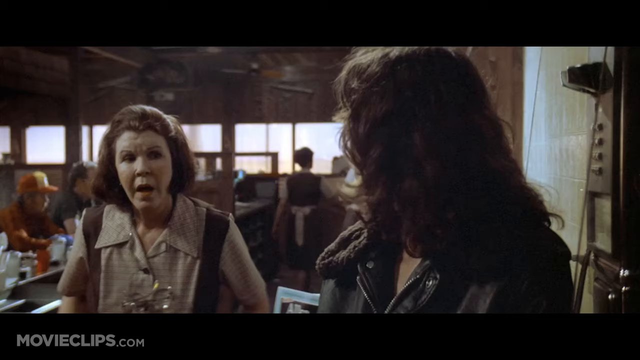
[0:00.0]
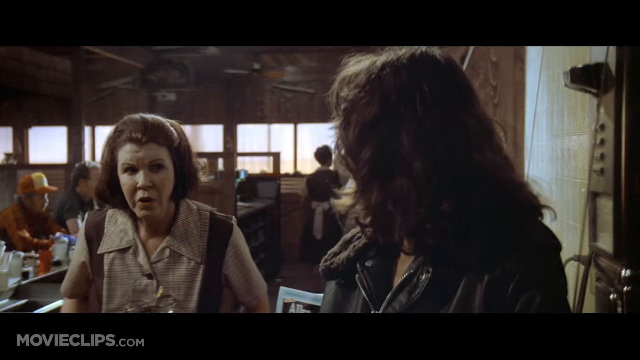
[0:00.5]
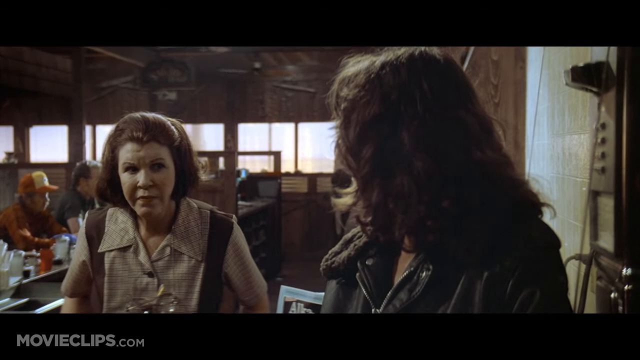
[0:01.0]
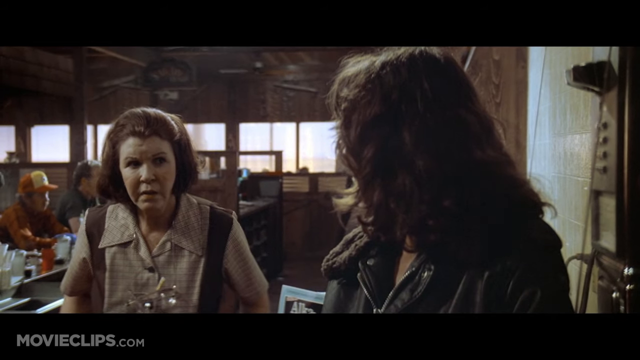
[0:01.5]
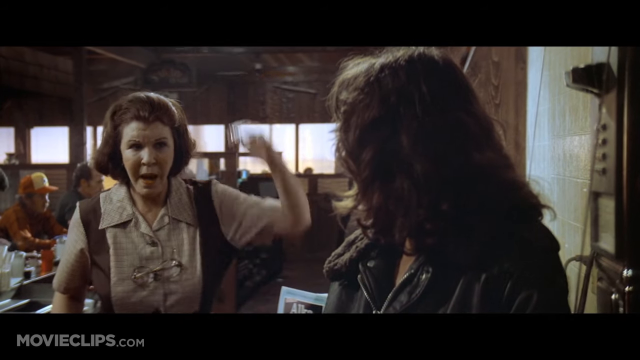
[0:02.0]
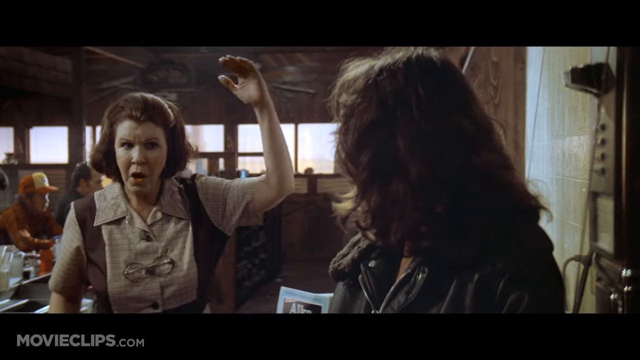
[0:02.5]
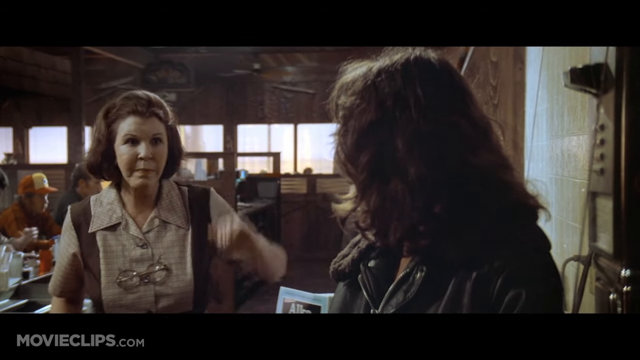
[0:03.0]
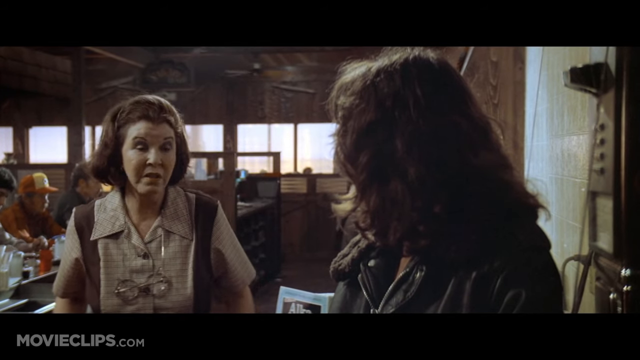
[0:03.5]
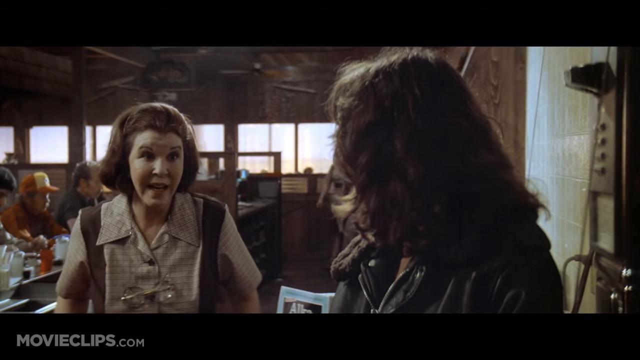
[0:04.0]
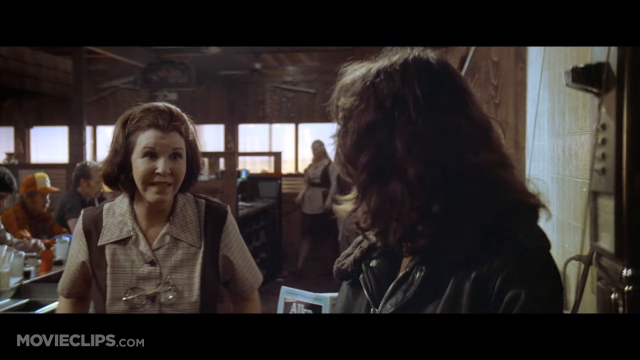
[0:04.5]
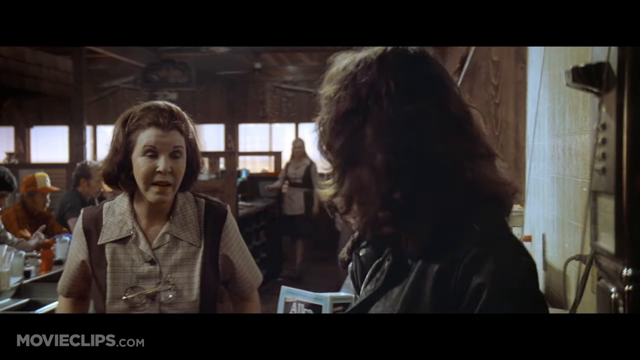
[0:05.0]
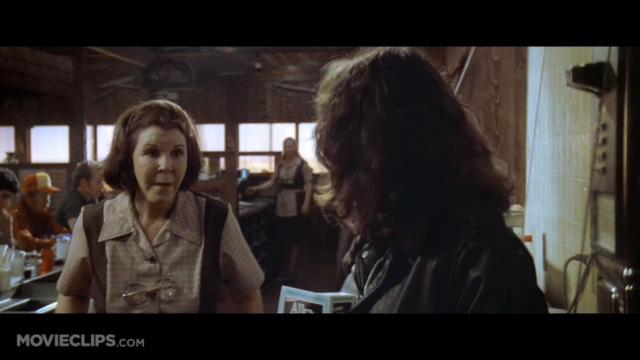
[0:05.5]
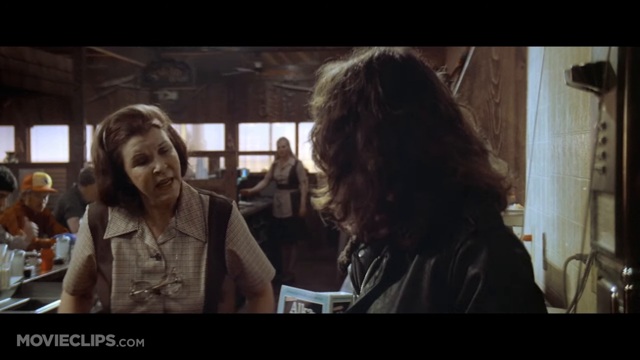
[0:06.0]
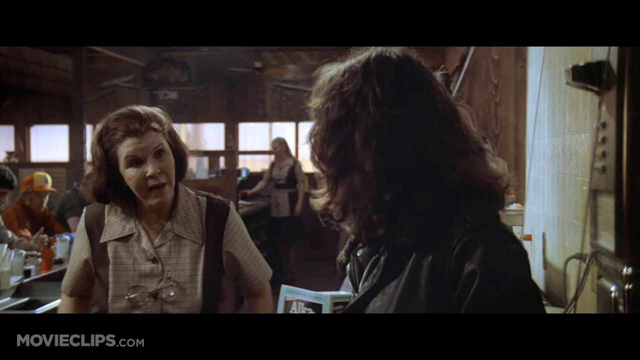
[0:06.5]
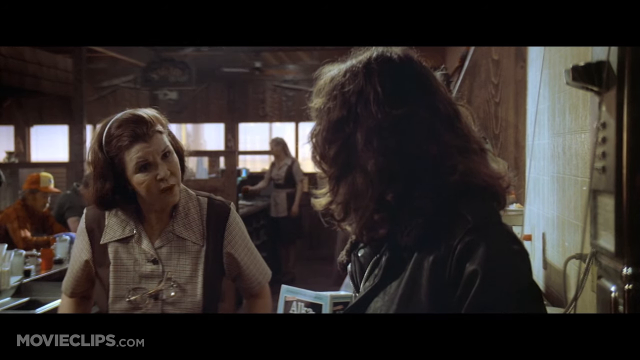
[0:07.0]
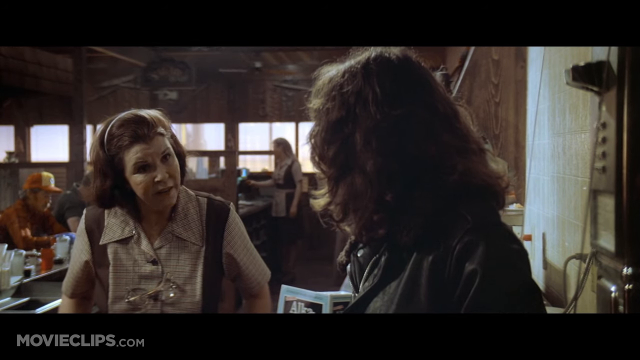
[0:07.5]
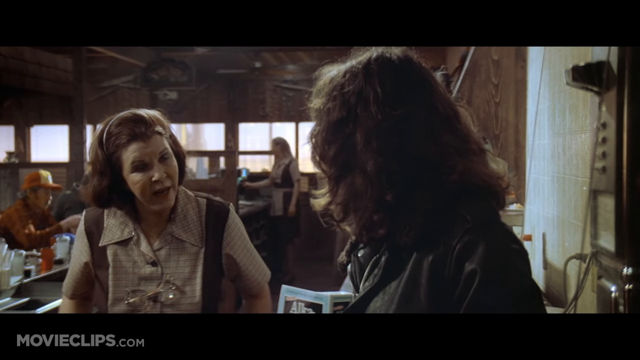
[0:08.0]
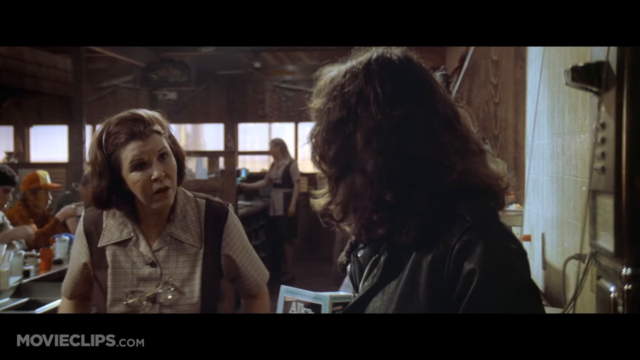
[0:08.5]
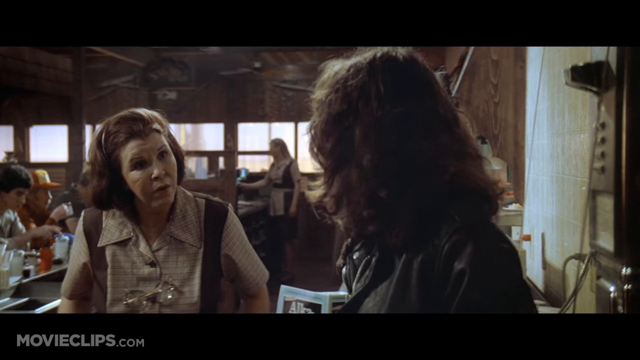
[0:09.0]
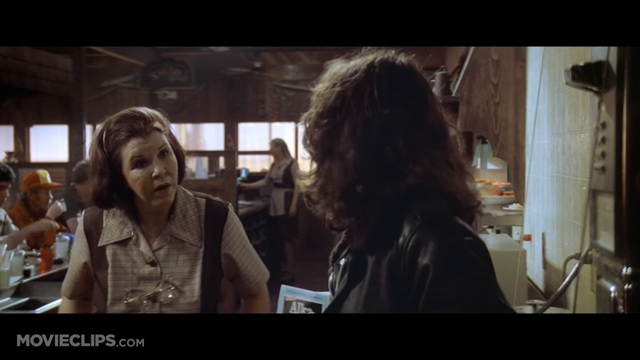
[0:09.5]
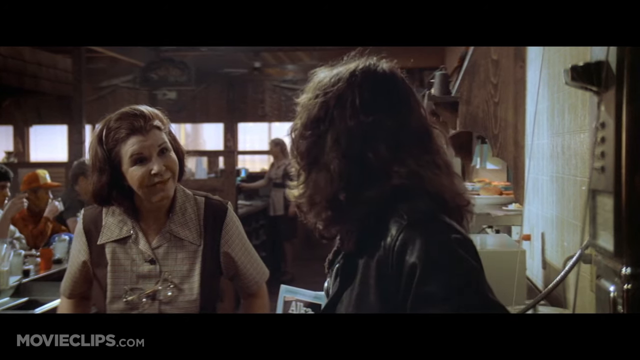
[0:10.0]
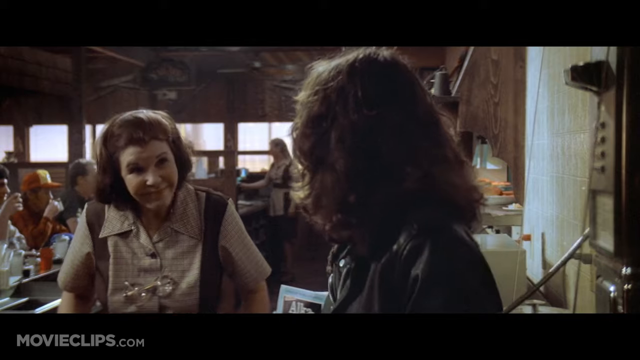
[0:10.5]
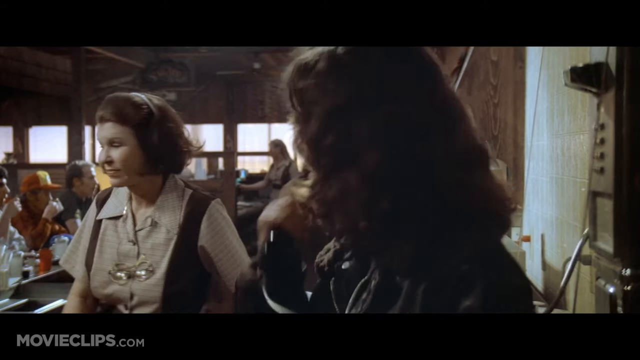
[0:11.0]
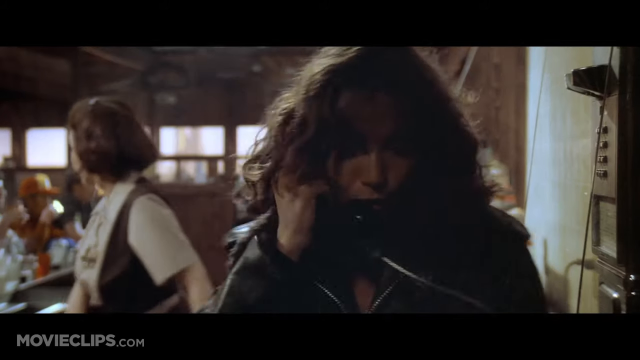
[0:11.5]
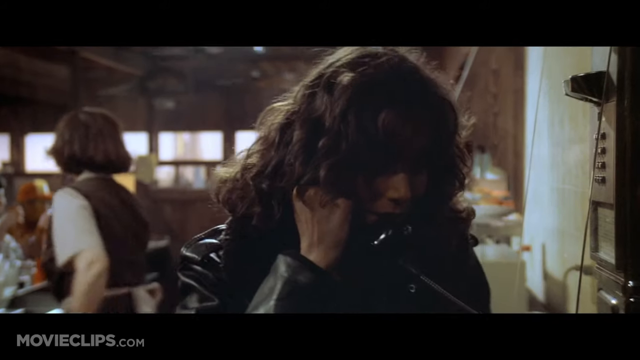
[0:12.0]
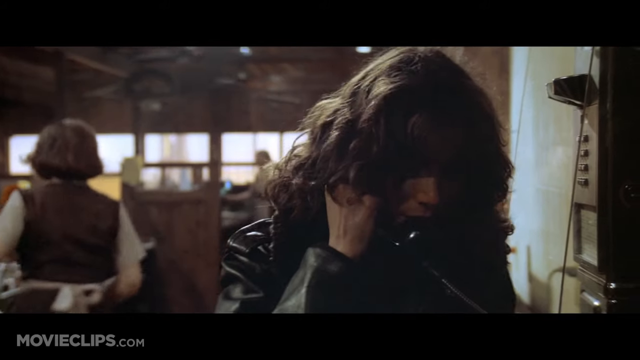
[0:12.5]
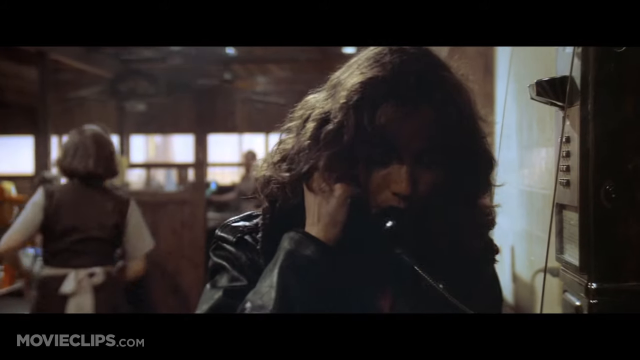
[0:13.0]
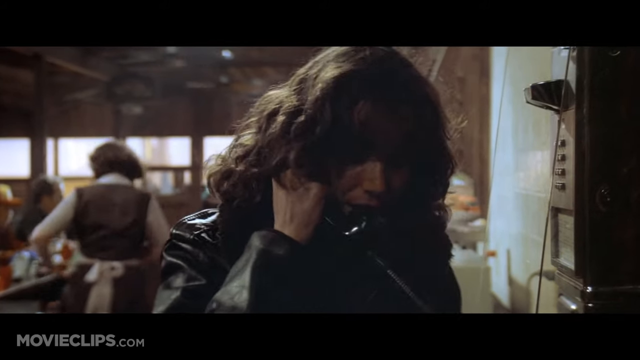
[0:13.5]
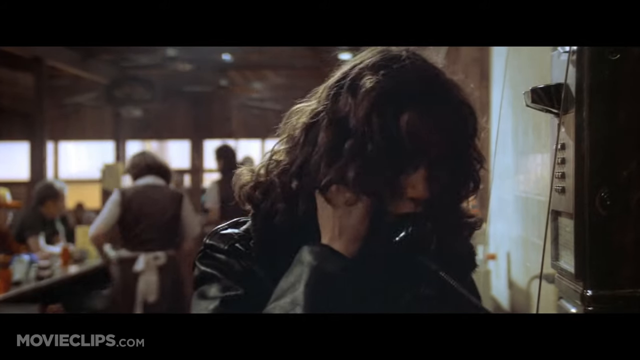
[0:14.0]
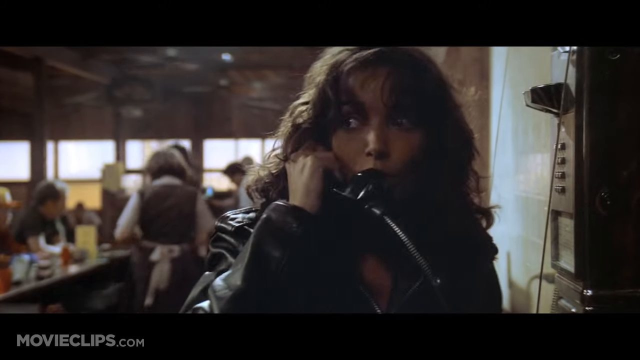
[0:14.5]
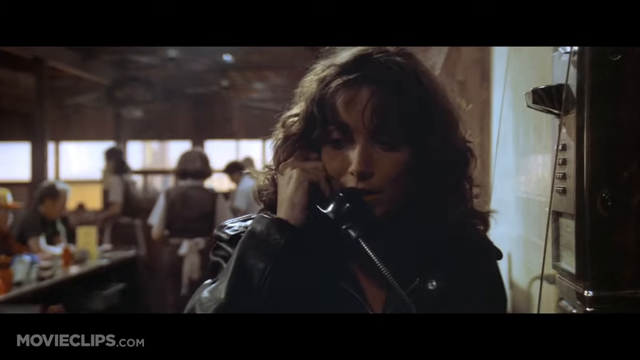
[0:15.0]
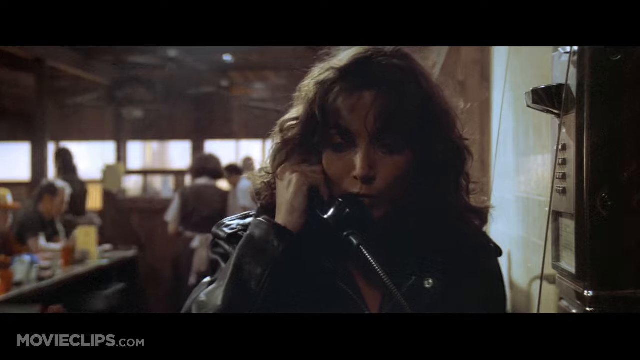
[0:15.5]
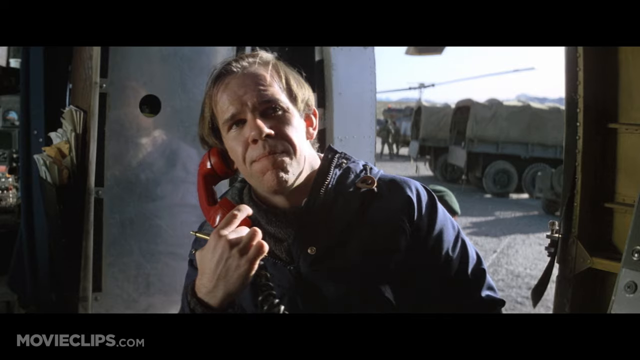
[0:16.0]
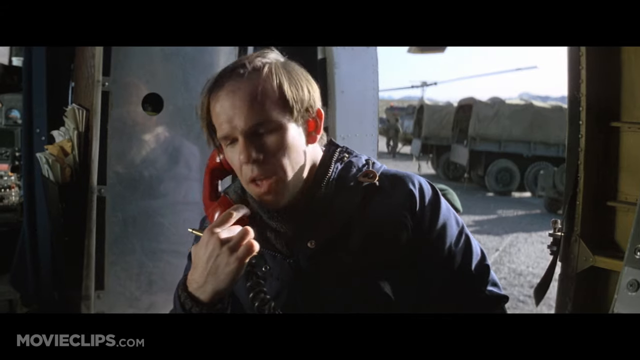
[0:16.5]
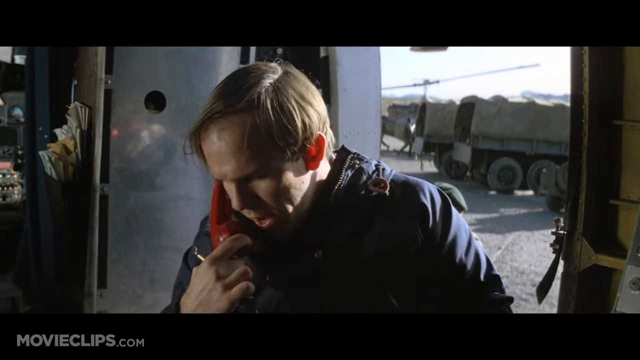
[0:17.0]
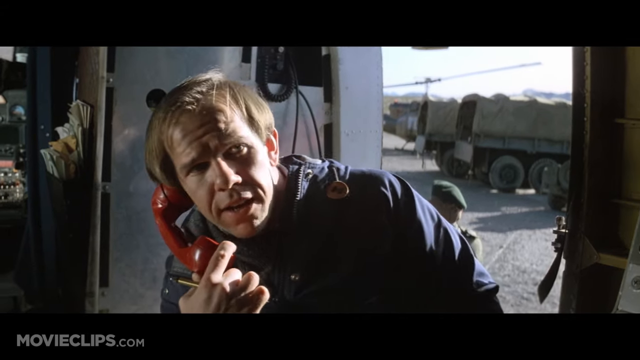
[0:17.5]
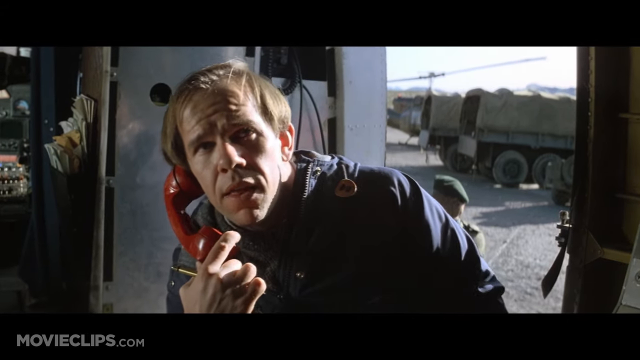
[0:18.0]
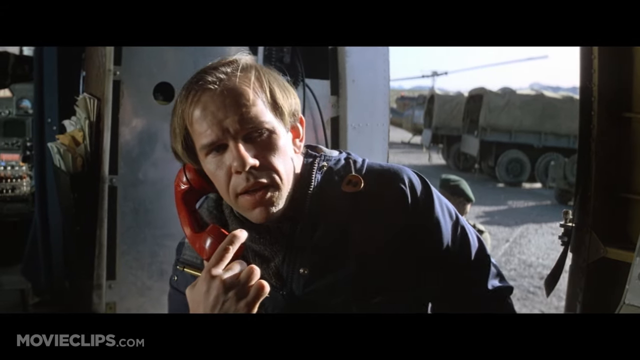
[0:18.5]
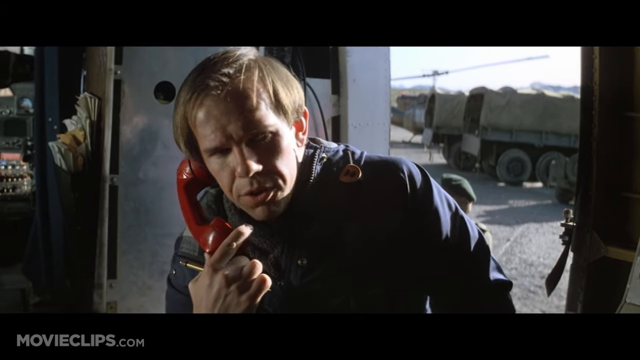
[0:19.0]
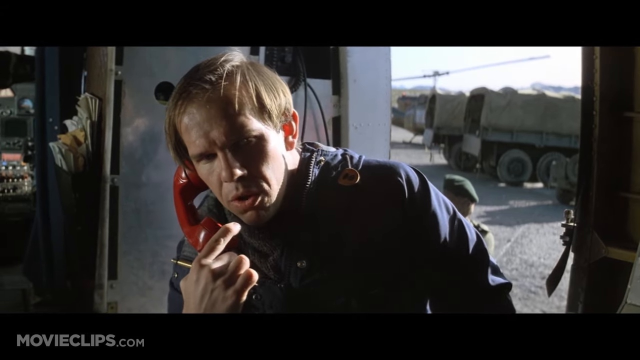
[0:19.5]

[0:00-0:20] Two women are chatting. One looks a bit older, seemingly between 50 and 60 years old, and the other is somewhat younger, possibly between 30 and 40. One woman turns around and leaves; she seems to be a waitress. The other woman turns around and speaks on a landline phone. The footage looks like it was filmed years ago. The woman is talking on the phone to a man who seems not too old, possibly middle-aged. He holds a red landline phone and looks at someone while speaking on it.